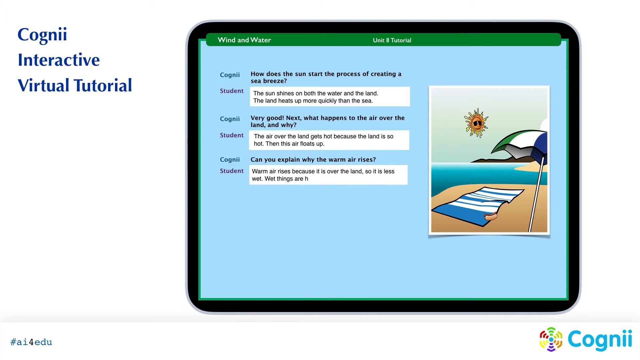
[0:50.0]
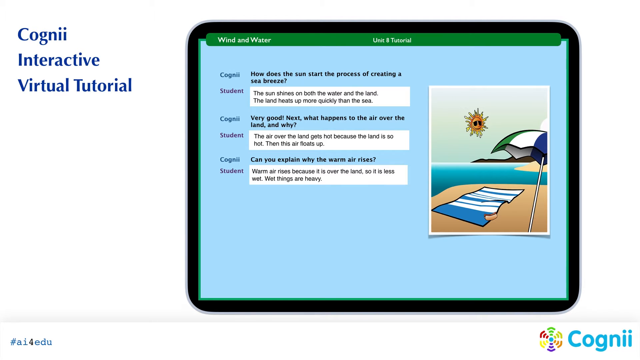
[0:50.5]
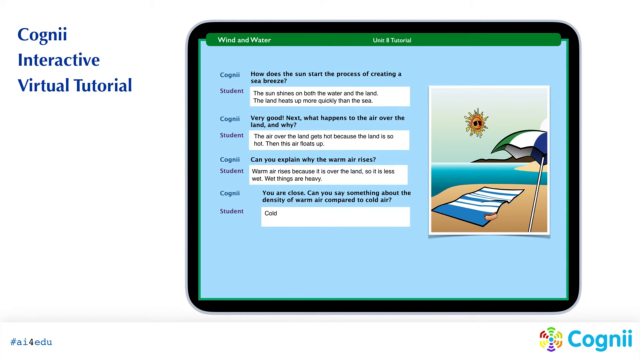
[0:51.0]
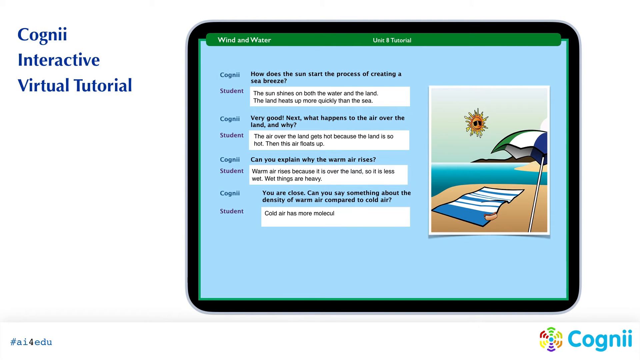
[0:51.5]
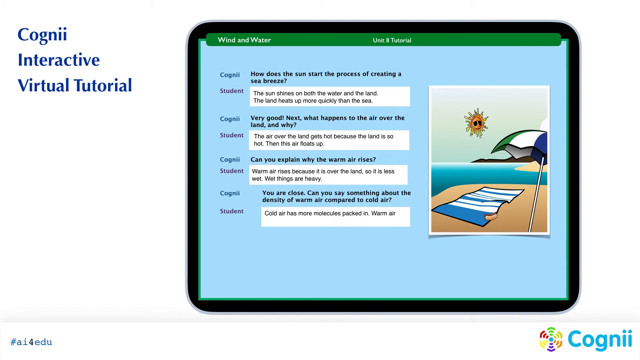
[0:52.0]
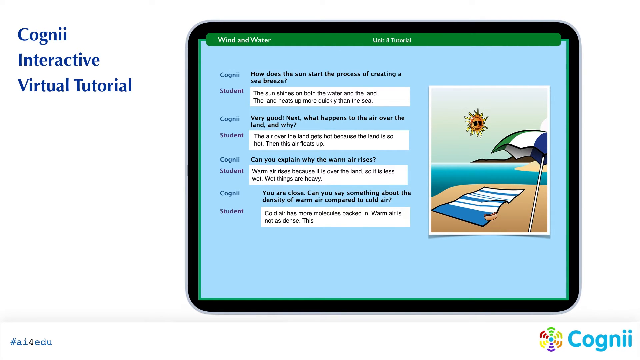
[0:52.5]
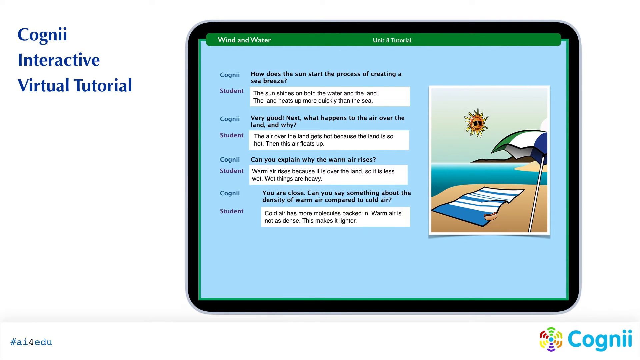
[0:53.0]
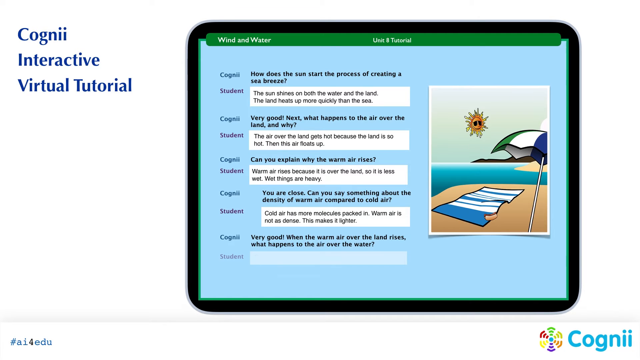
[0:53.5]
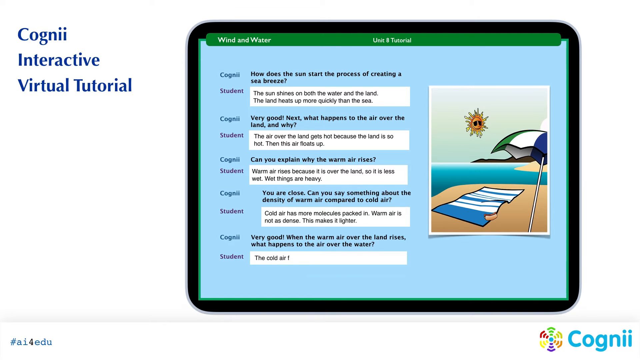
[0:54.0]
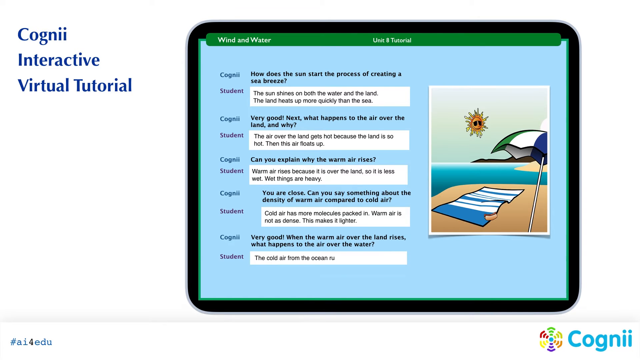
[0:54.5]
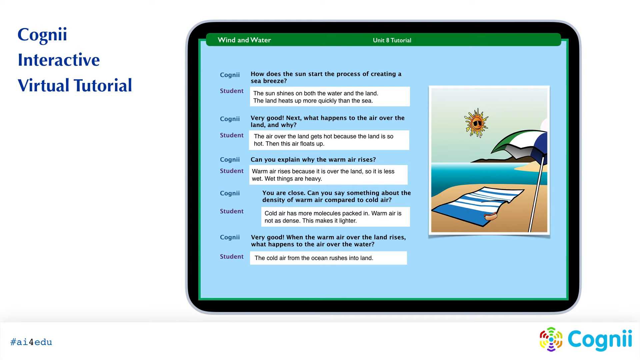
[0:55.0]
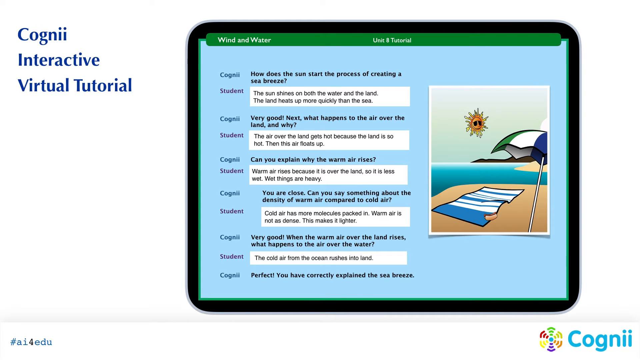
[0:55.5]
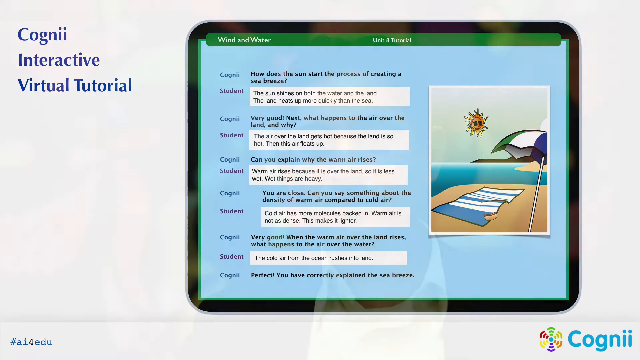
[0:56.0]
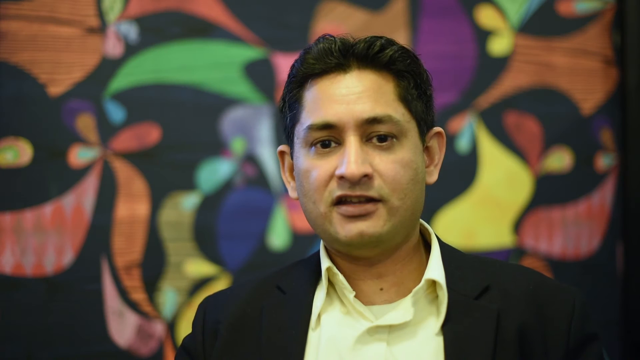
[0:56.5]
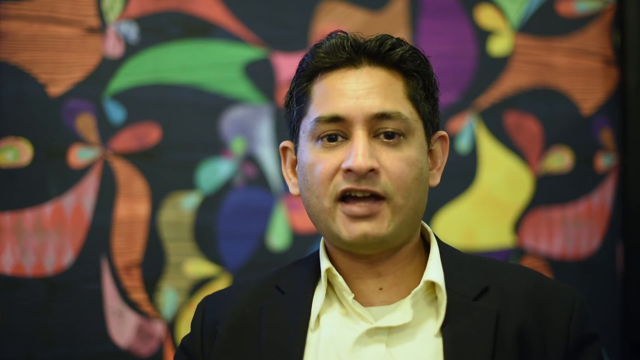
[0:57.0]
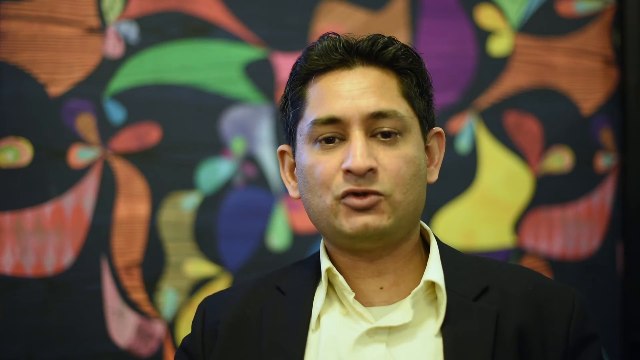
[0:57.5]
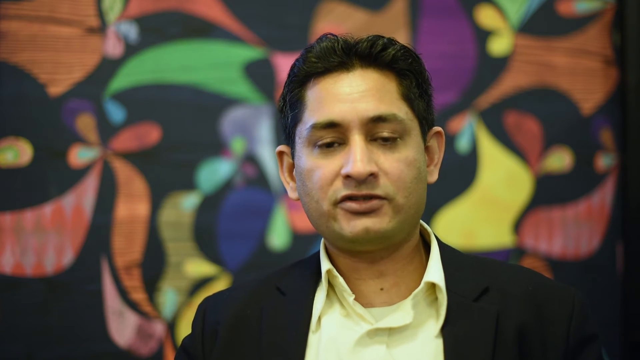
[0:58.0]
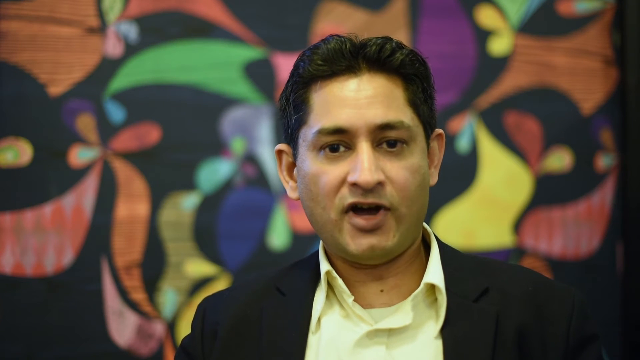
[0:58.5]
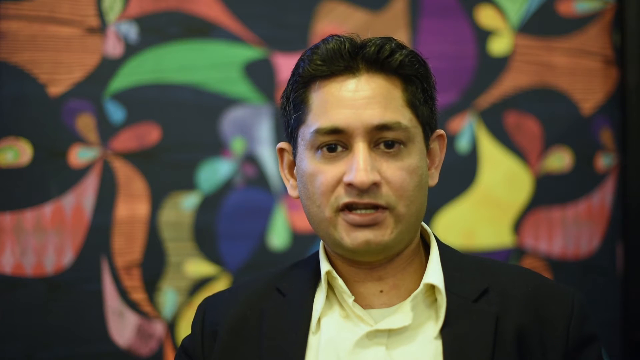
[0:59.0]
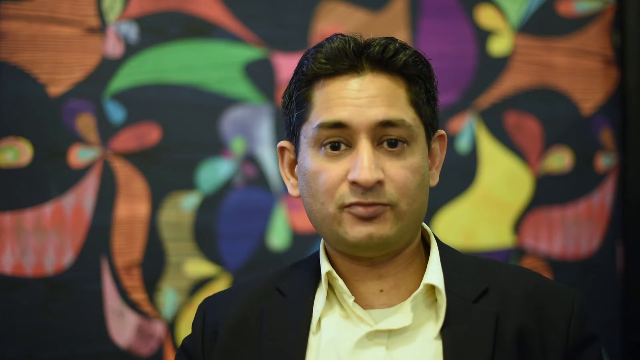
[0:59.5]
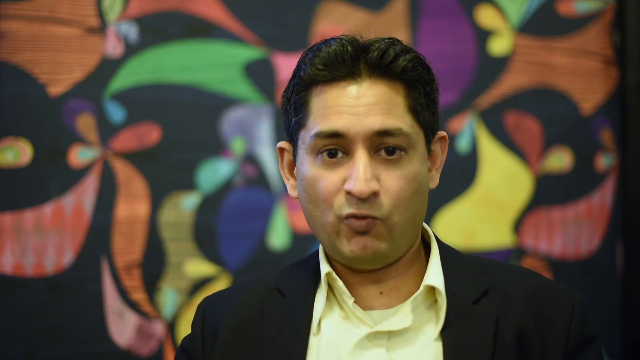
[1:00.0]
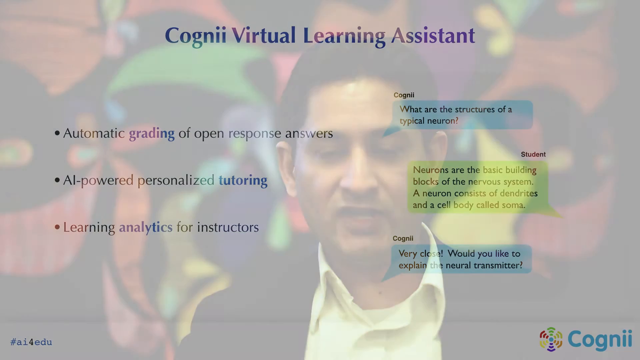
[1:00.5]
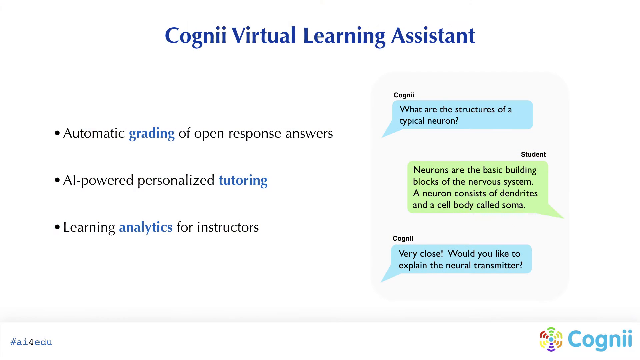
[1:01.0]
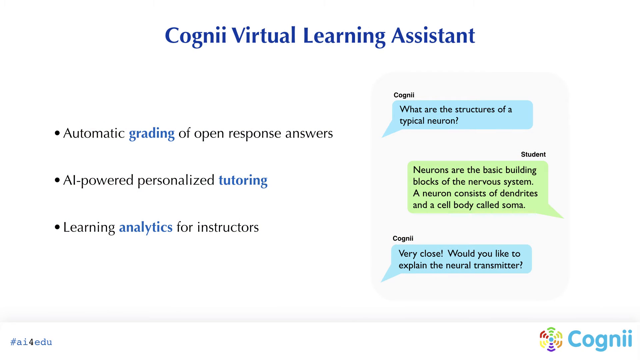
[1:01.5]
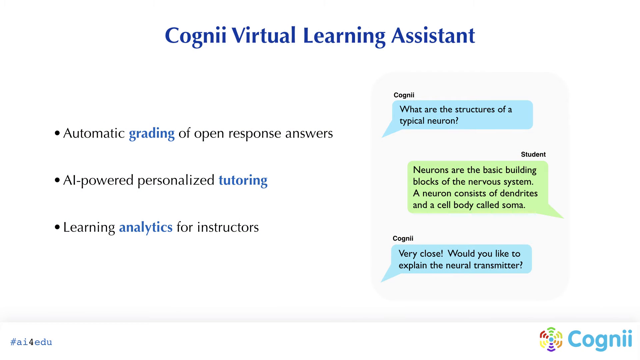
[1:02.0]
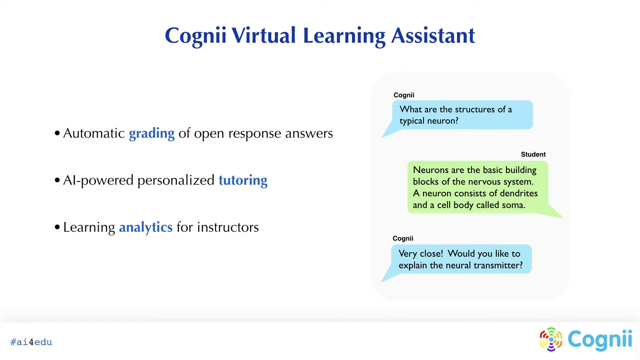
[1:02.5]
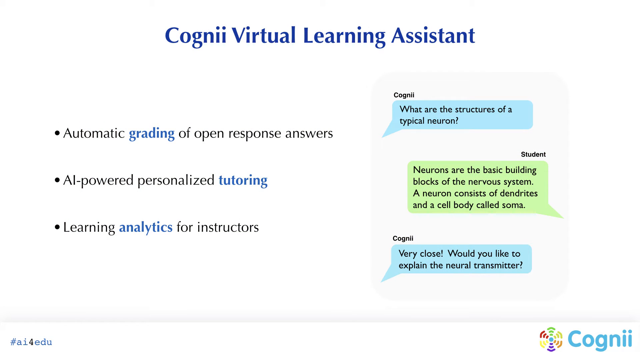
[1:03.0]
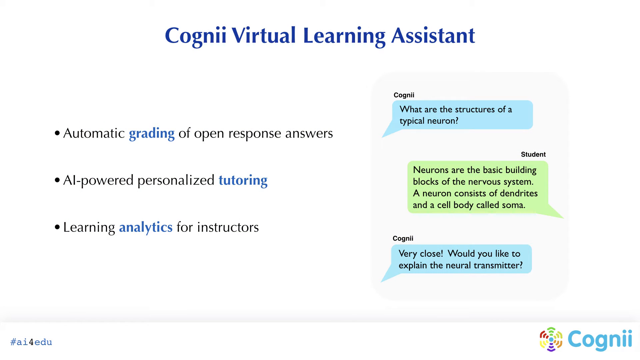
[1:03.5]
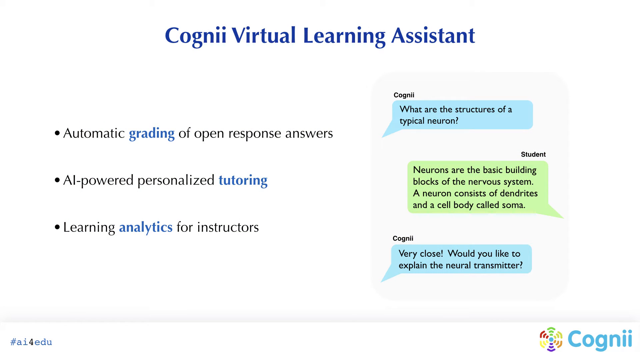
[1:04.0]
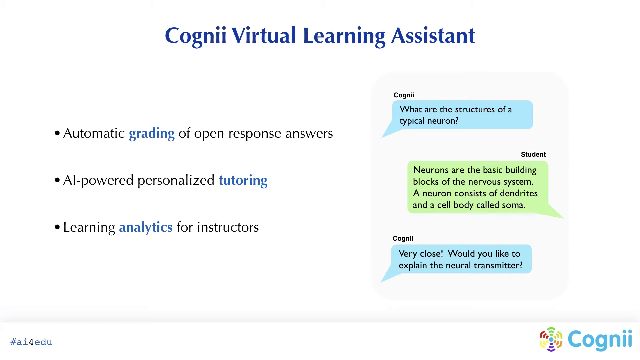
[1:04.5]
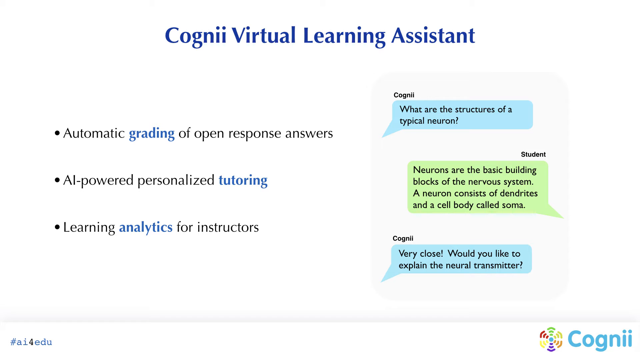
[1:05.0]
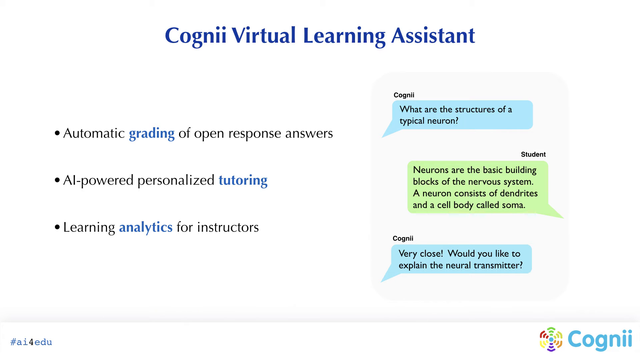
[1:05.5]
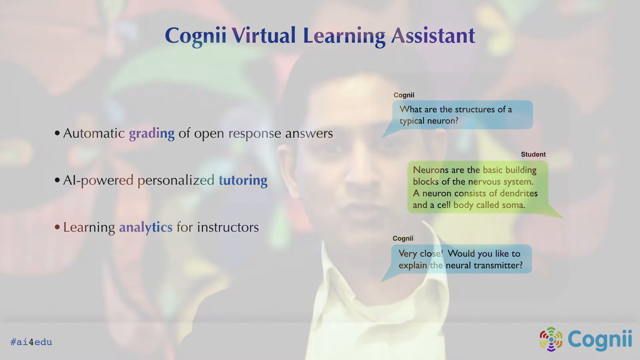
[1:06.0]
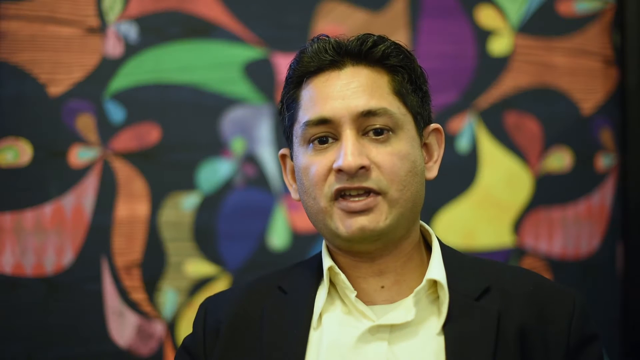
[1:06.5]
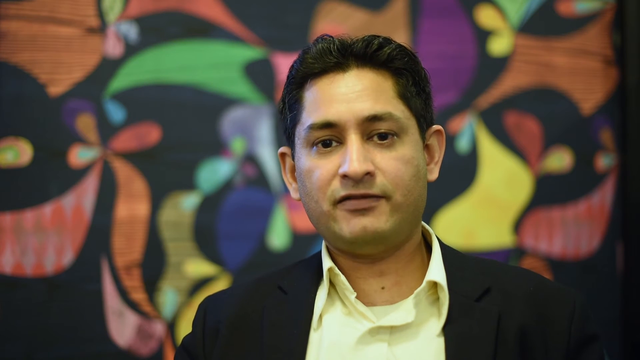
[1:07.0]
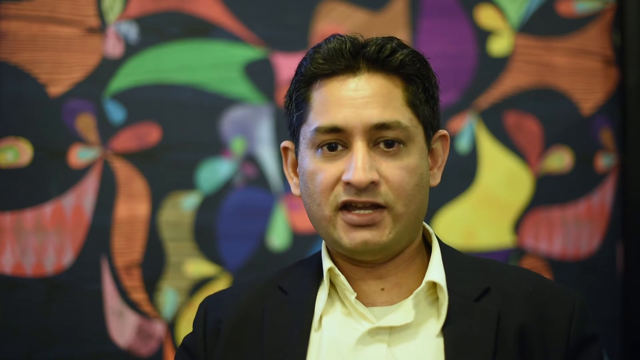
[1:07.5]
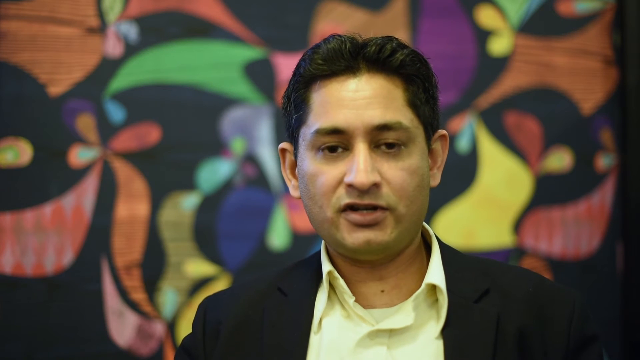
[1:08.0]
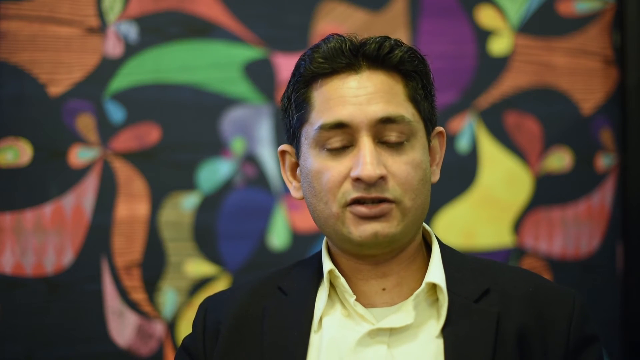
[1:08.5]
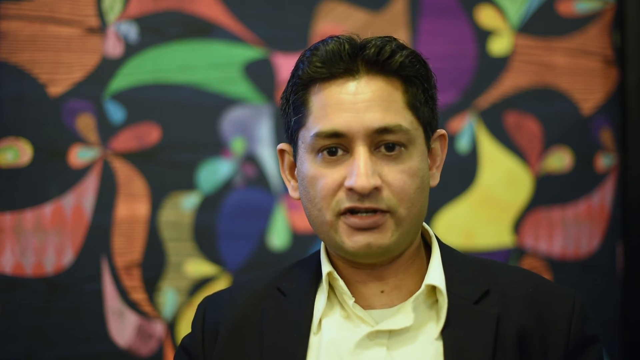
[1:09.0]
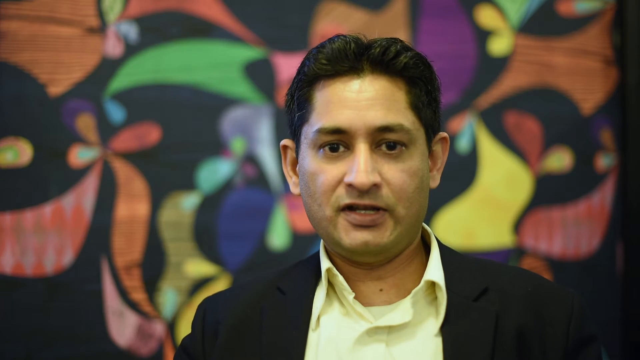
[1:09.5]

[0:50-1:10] The Cogni Interactive Virtual Tutorial, a virtual tutor, is presented, along with the Cogni Virtual Learning Assistant, automatic grading of open response answers, AI-powered personalized tutoring, and learning analytics and instructors. An exchange follows about the structures of a typical neuron, with the student stating that neurons are the basic building blocks of the nervous system and that a neuron consists of dendrites and a cell body called the soma, and the question "Would you like to explain the neural transmitter?"